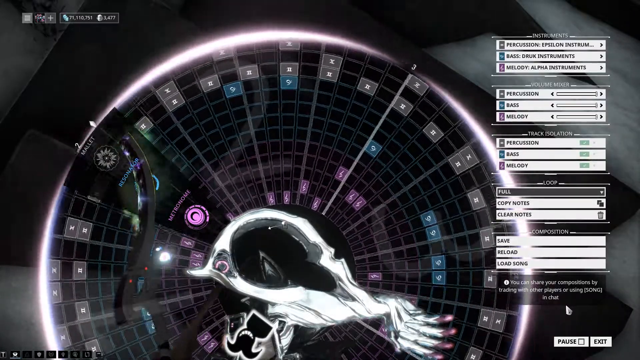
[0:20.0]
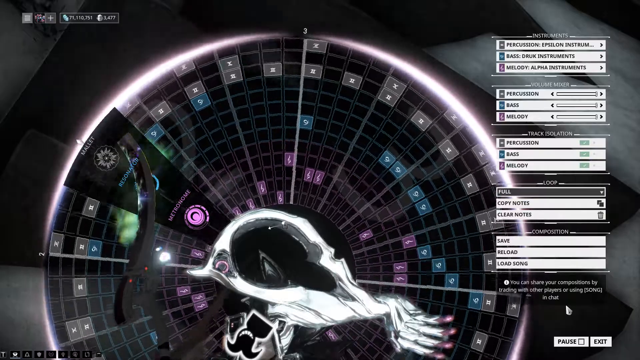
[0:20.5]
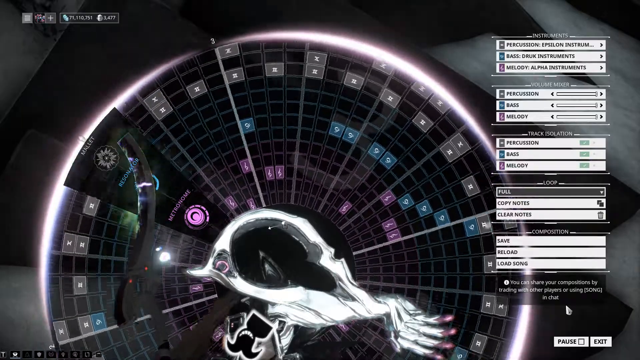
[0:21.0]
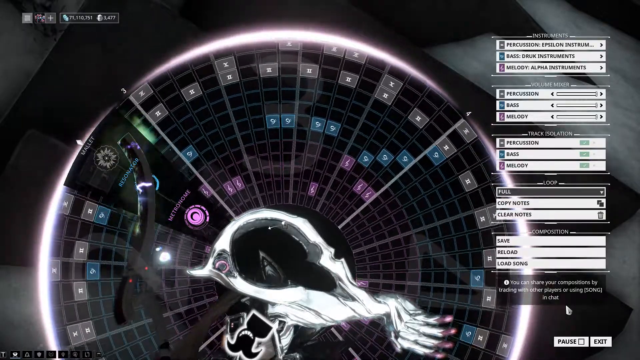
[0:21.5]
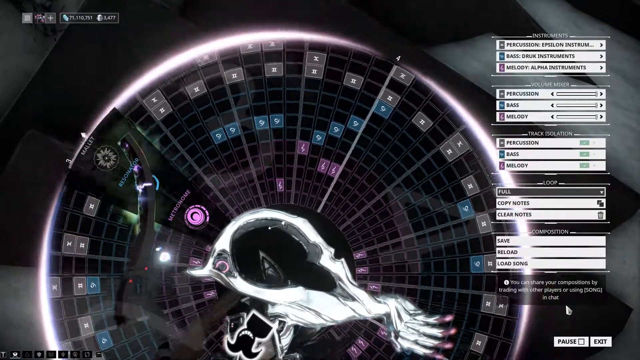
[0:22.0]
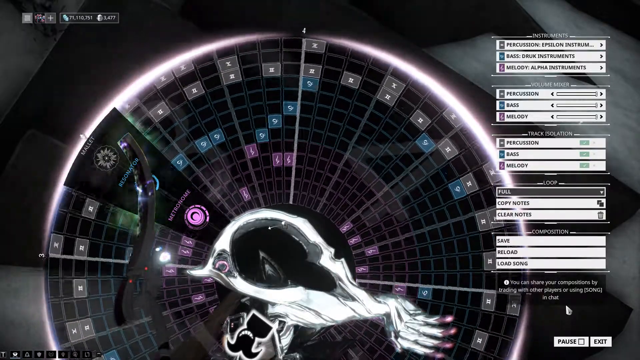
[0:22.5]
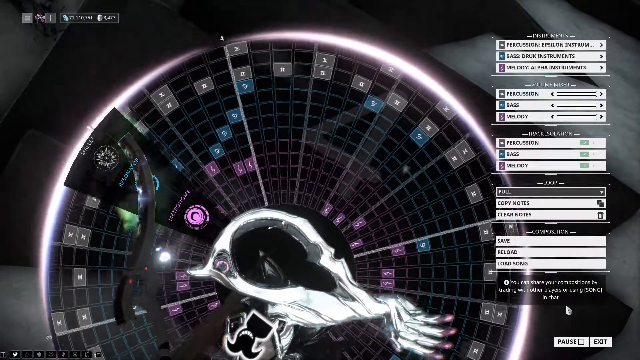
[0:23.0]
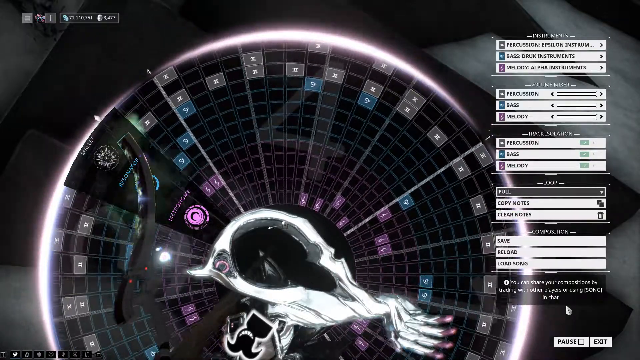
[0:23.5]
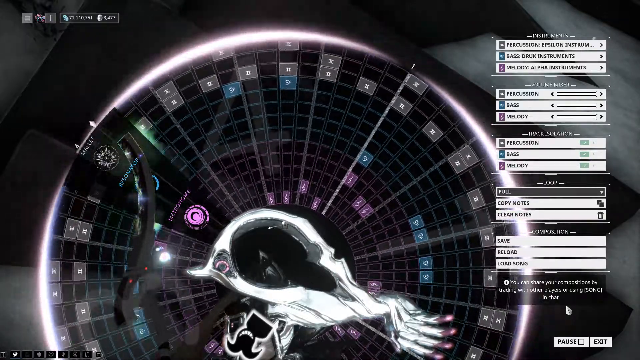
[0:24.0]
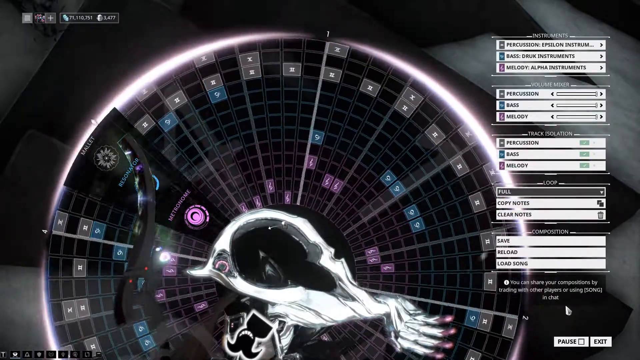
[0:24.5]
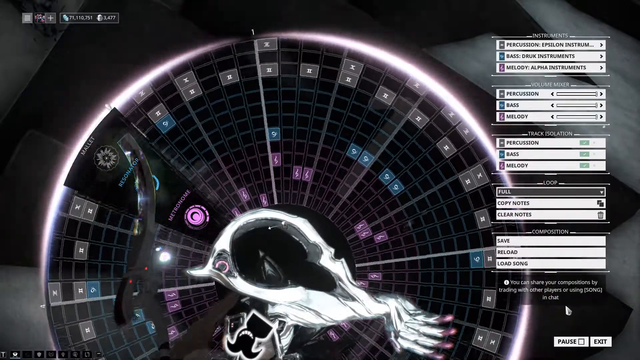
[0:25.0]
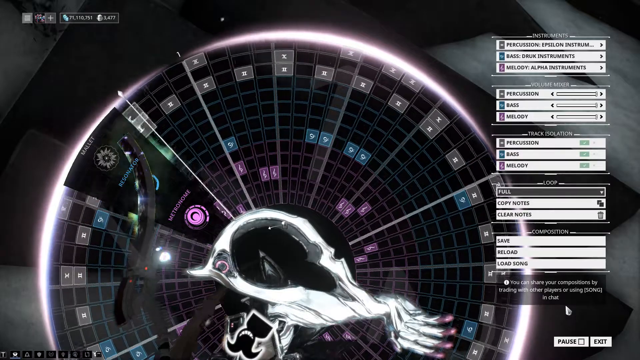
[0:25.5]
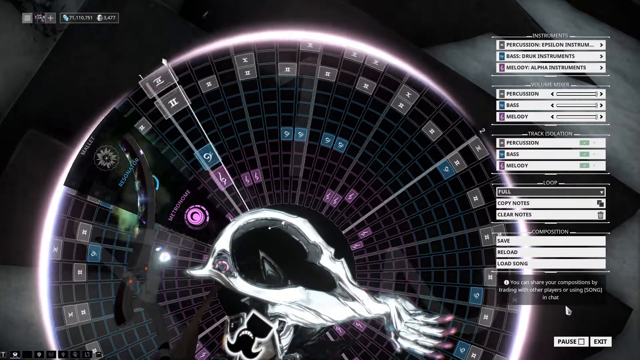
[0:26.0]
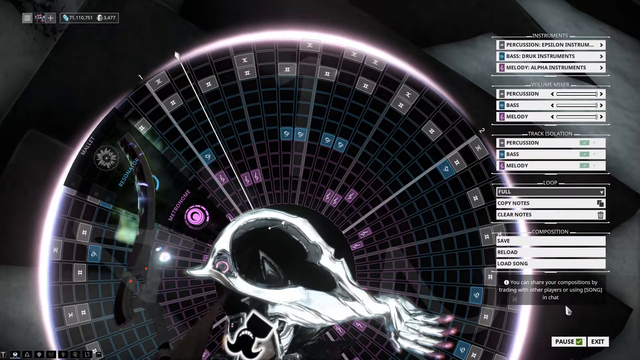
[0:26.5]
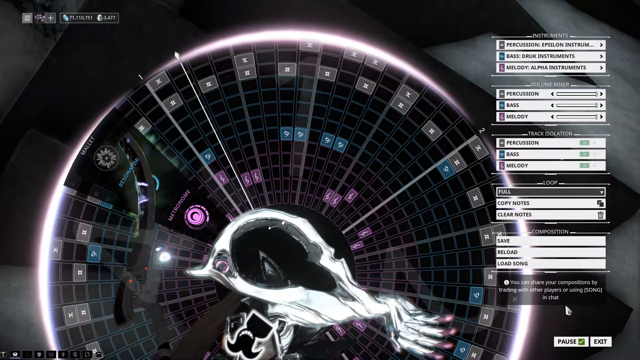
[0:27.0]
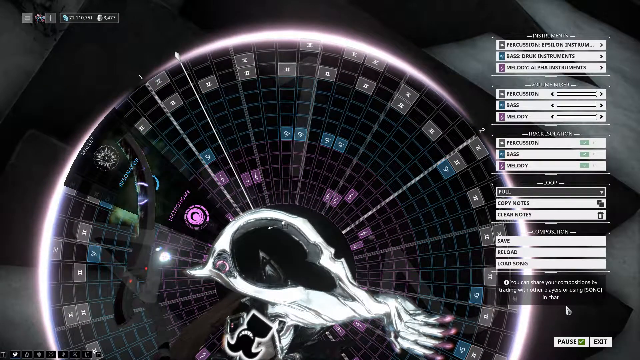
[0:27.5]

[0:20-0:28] The black wheel, broken up into segments with squares bearing musical-note symbols and other symbols, turns. None of the text on the side of the screen changes as it turns. A black segment remains static over the top of, or in front of, the spinning wheel, and visual effects play on it: sizzling blue lightning and some kind of smoke emitting behind and around its edge.